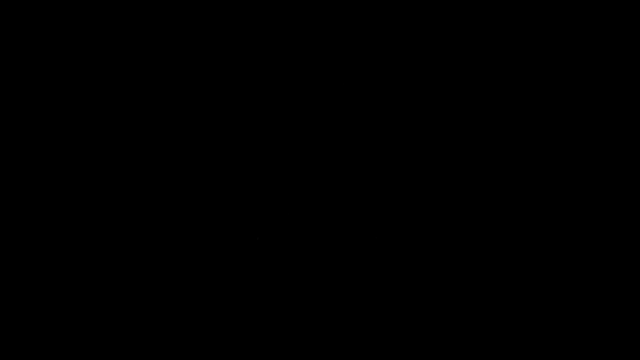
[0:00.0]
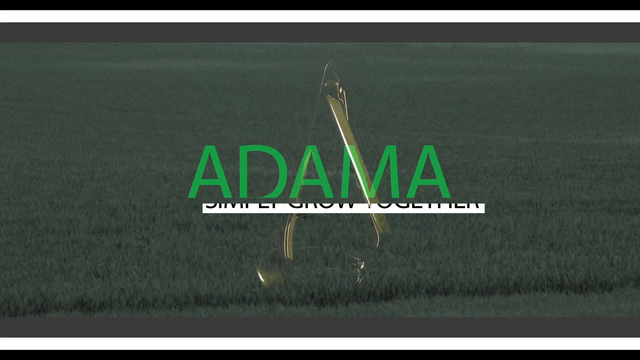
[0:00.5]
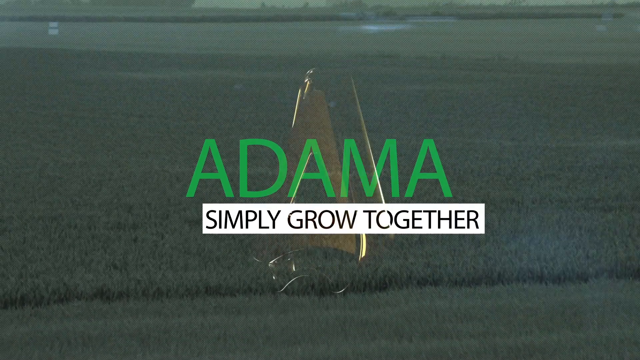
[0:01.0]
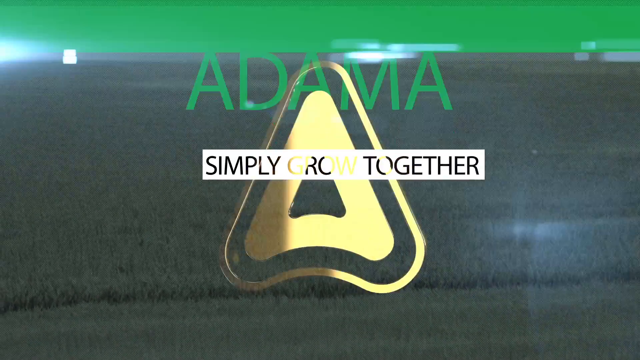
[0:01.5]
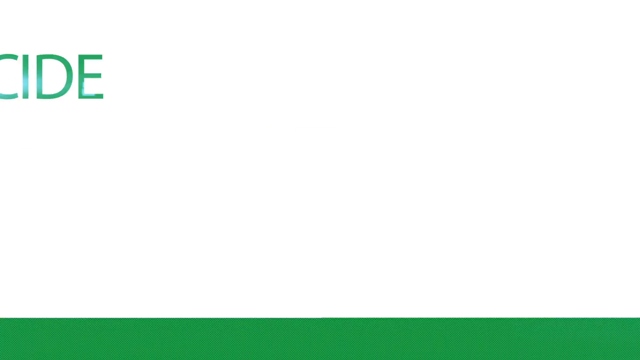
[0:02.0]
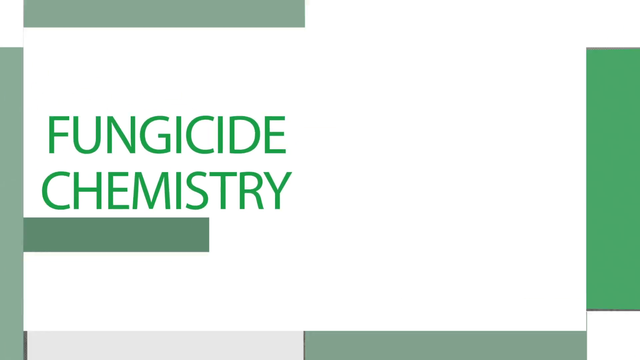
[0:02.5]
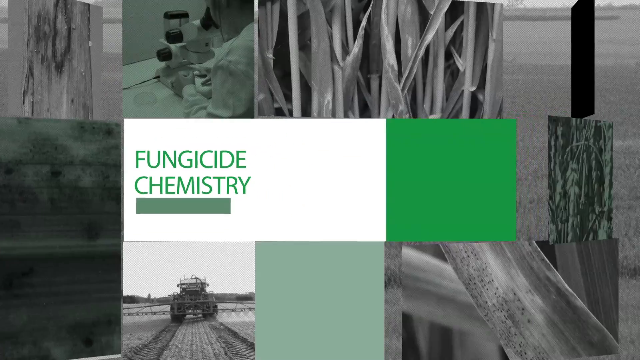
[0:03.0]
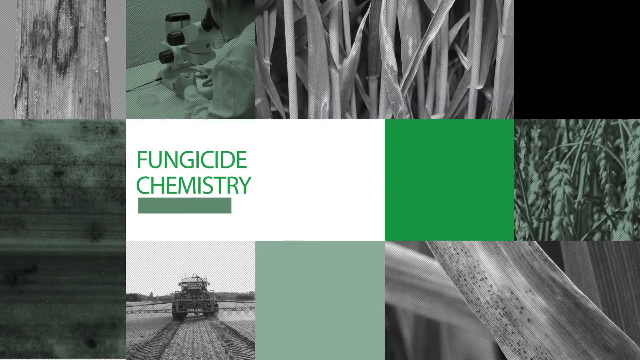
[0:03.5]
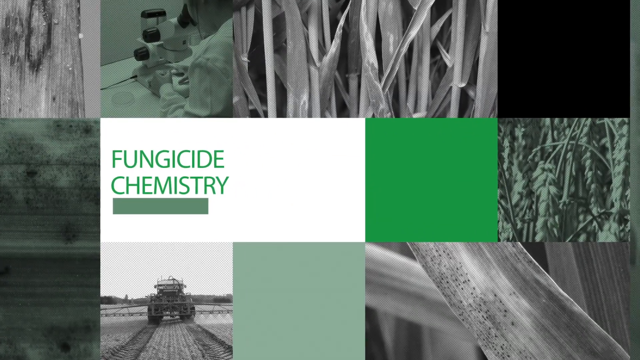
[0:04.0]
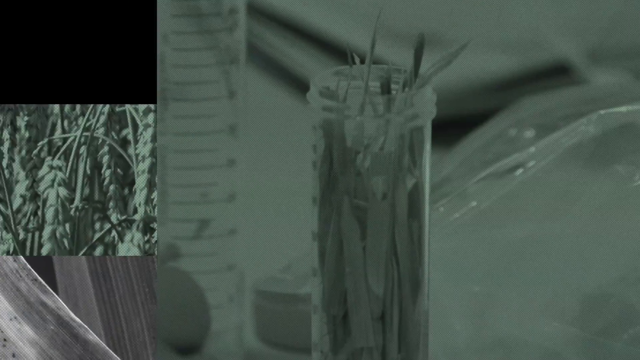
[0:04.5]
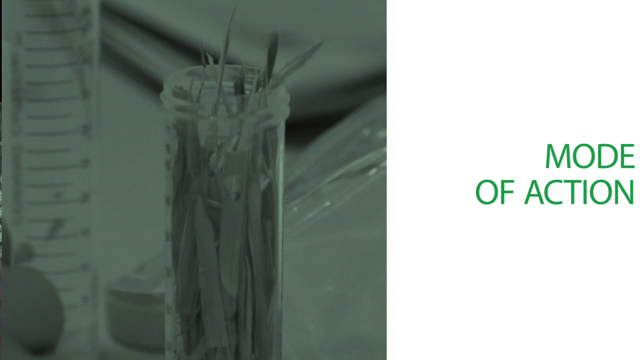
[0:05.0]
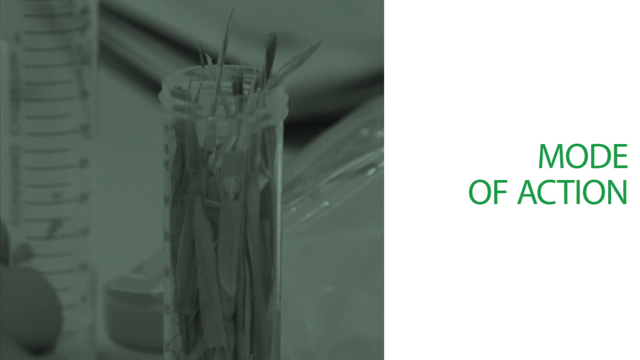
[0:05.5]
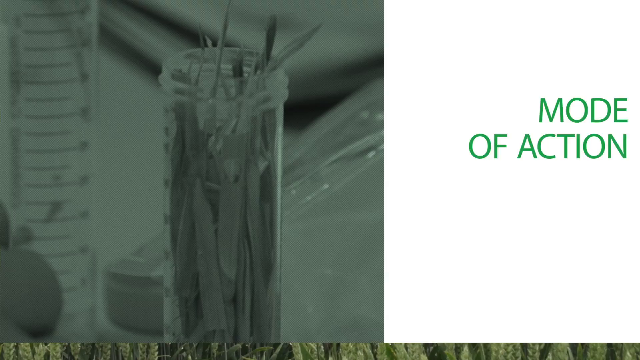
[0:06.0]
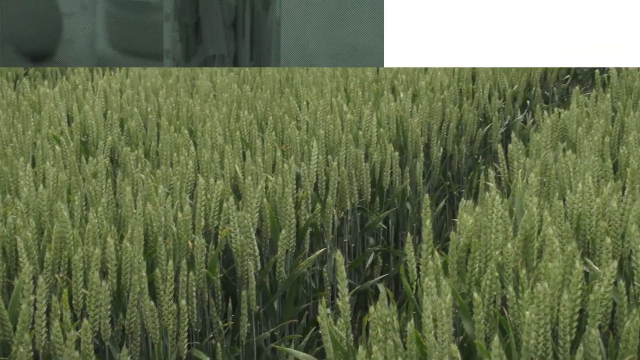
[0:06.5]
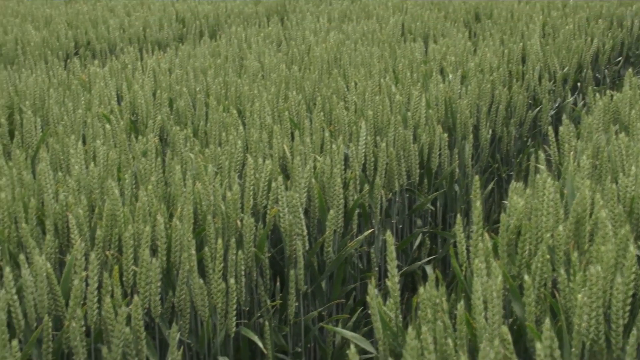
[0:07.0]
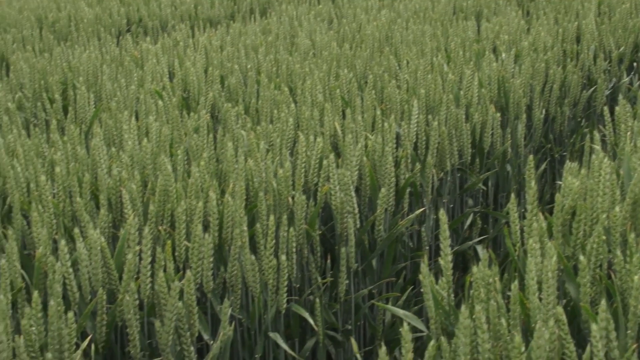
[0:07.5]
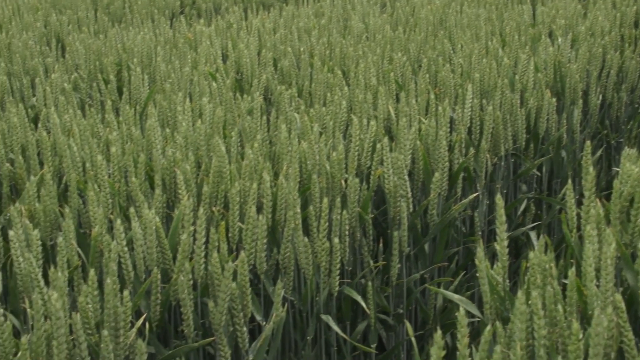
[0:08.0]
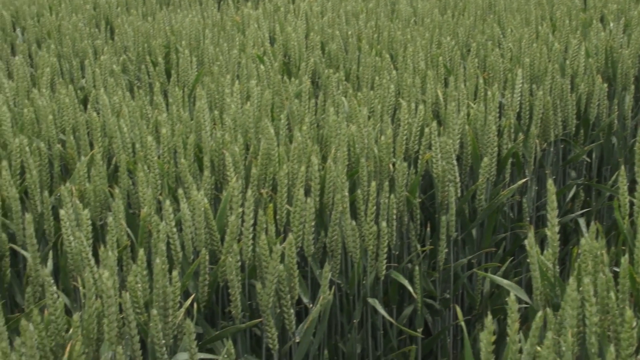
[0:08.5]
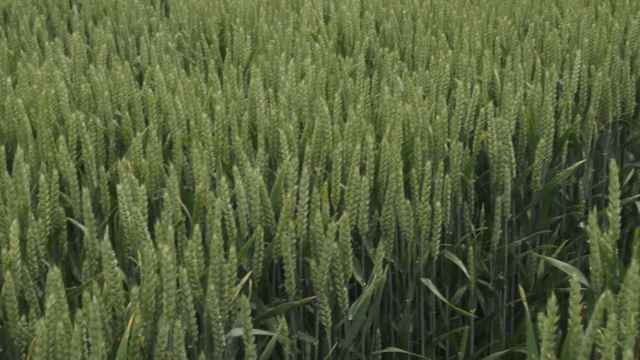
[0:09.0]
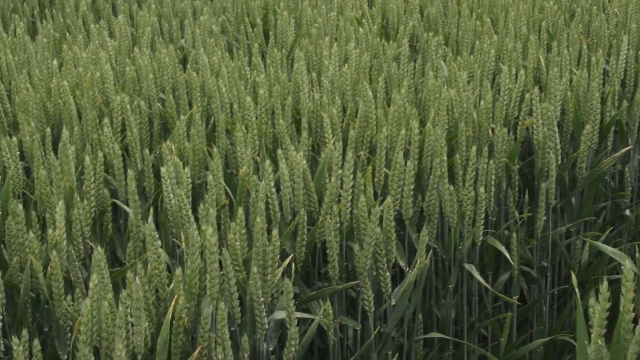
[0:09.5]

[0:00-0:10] A title screen with a fairly flashy green colour scheme appears, with what seems to be a background image of a field. Green text reads "Adama", with a white box of black text underneath saying "simply grow together", and then a logo flashes up. The next title screen says "fungicide chemistry" and has many tiled black and white images on it, followed by a screen that says "mode of action", also in green writing. The view then pans to an image of a wheat field, which stays on screen for a couple of seconds.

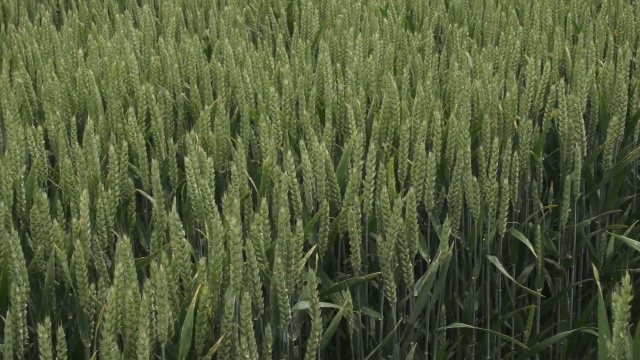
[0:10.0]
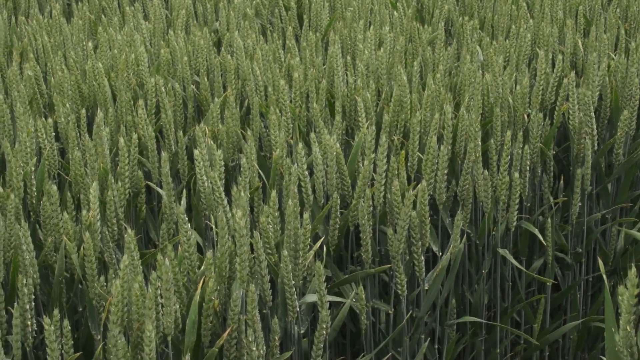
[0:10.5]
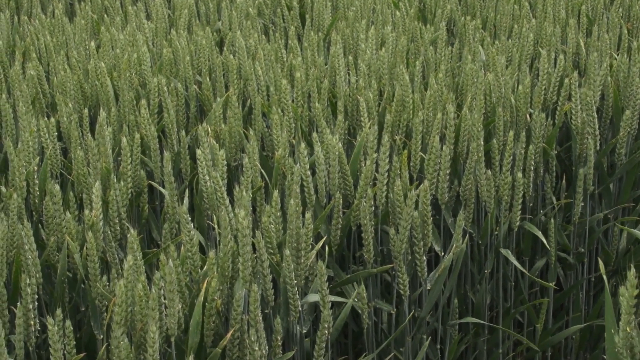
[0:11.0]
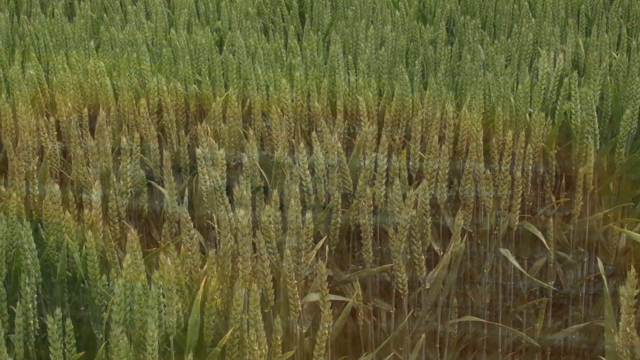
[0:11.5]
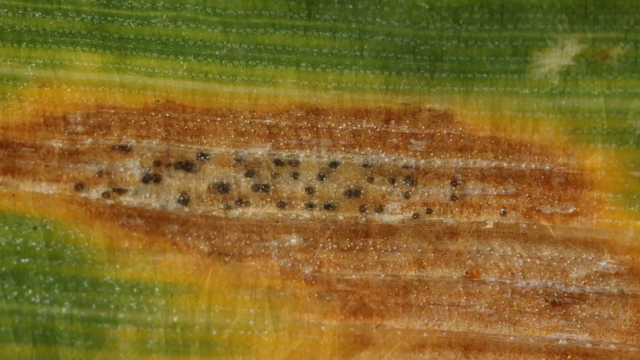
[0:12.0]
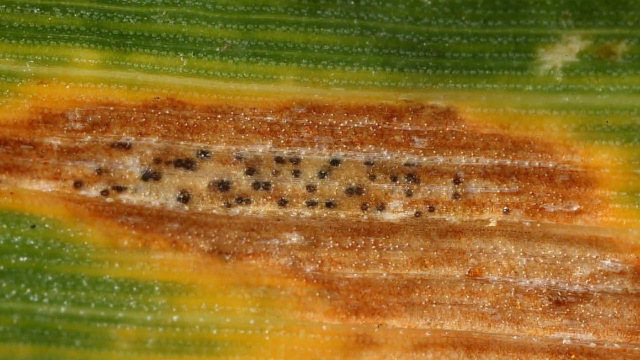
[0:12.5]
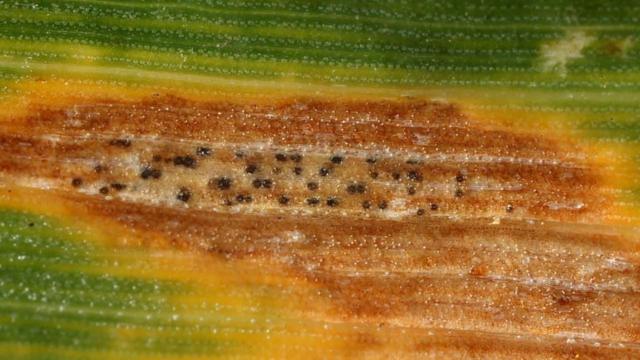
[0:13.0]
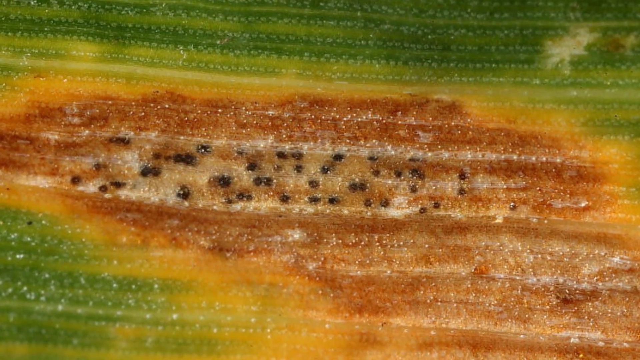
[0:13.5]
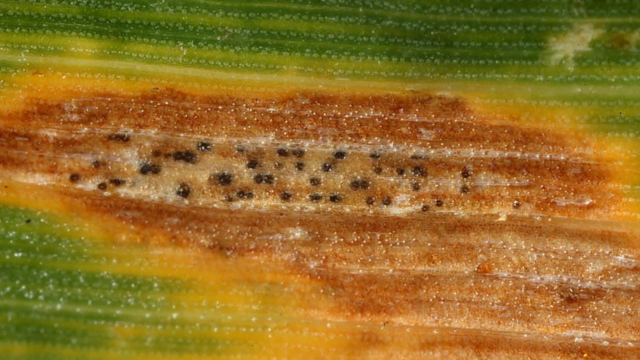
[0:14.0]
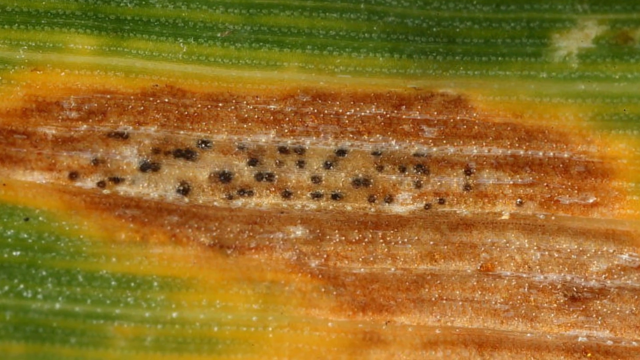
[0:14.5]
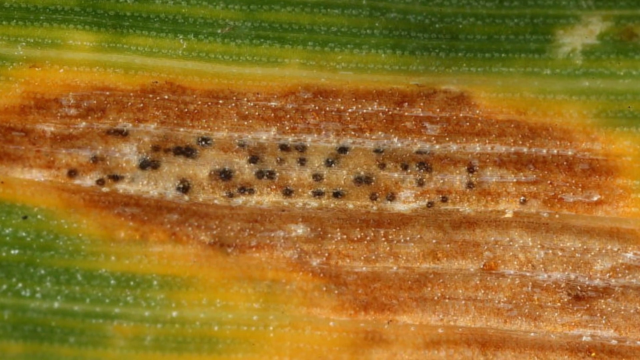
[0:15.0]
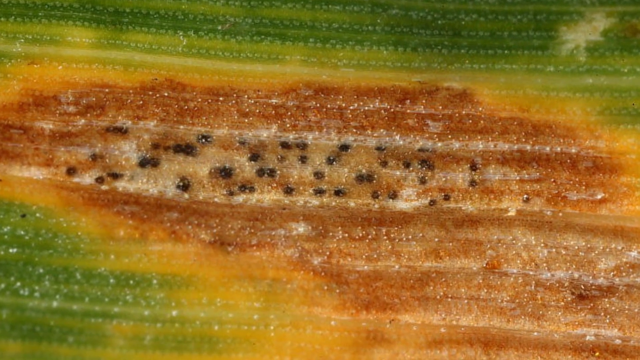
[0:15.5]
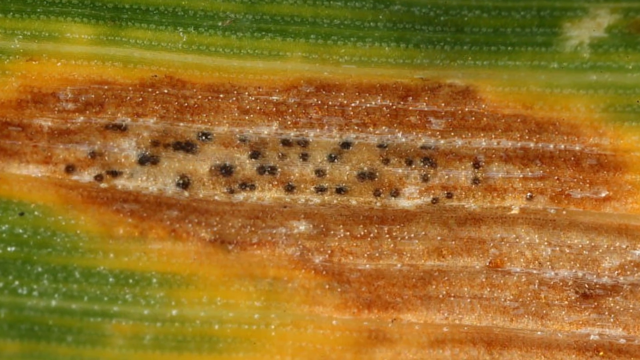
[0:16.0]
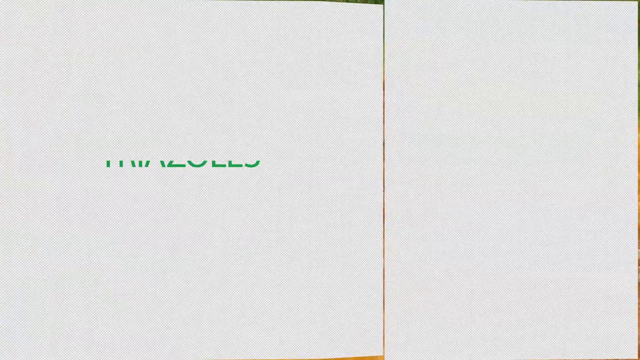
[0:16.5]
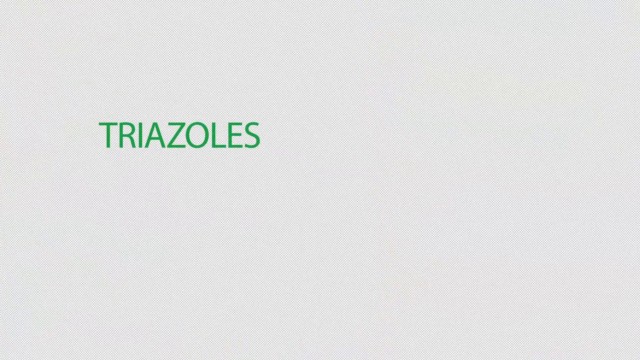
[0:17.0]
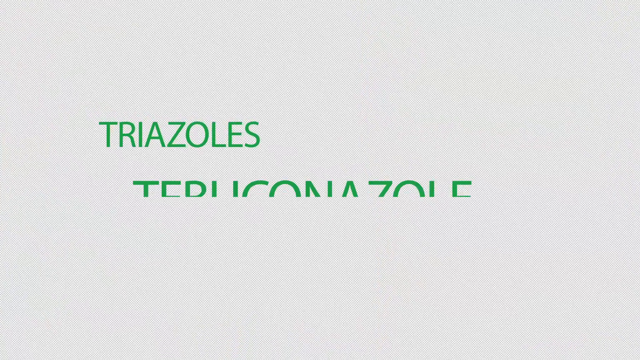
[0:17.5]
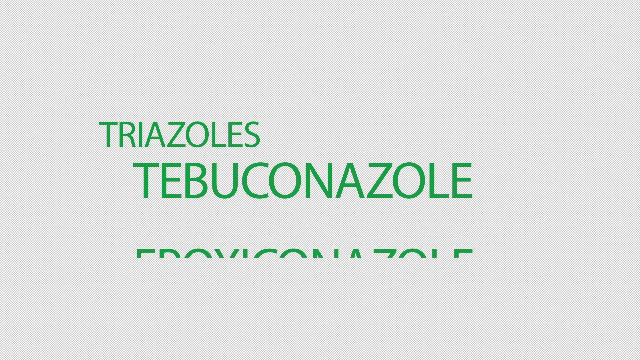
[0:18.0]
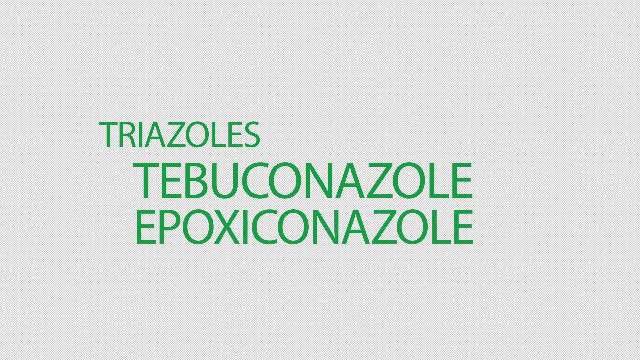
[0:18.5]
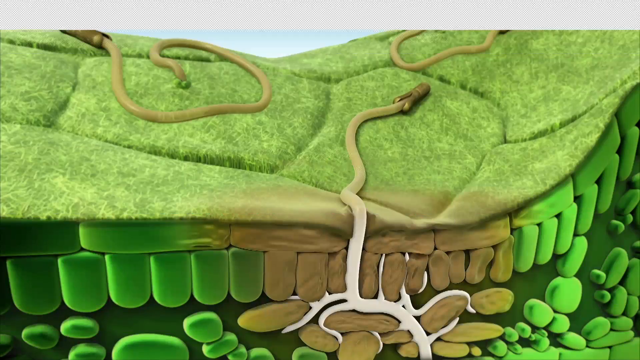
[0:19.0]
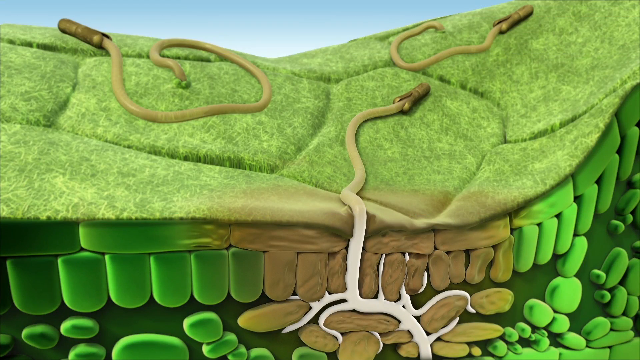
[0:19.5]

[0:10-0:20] The same wheat field image continues, in colour, with the green wheat gently blowing in the wind. Next comes what seems to be a zoomed-in image of some kind of green plant with a brown marking that has small dark brown spots on it. After this image is displayed for a few seconds, a title screen appears with the words "triazoles, tebuconazole, and epoxiconazole". A diagram then shows snake-like objects seeping out of a layer of what appears to be a land mass, along with a depiction of what is happening underneath the ground.